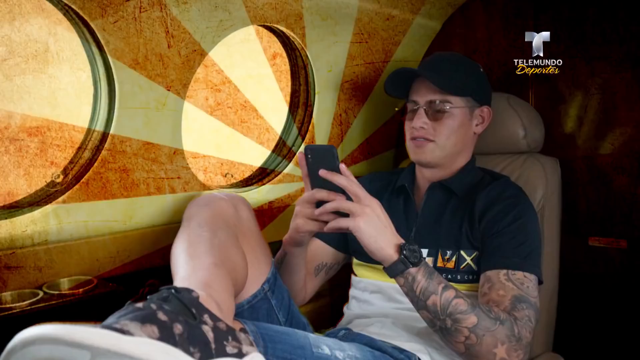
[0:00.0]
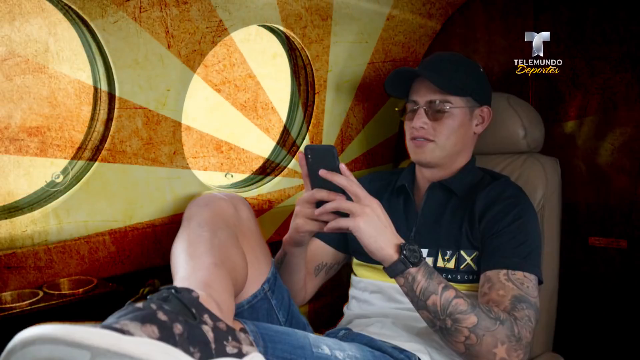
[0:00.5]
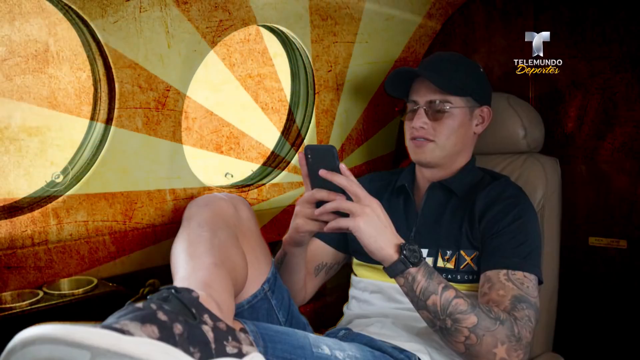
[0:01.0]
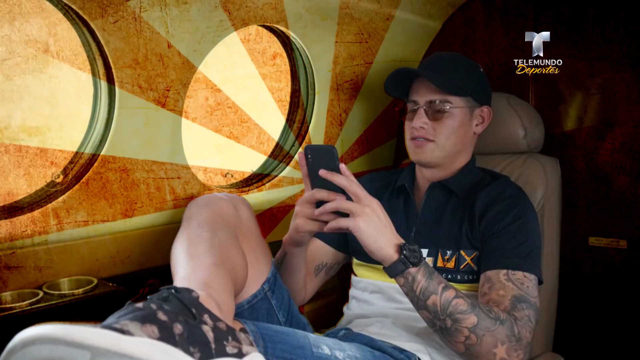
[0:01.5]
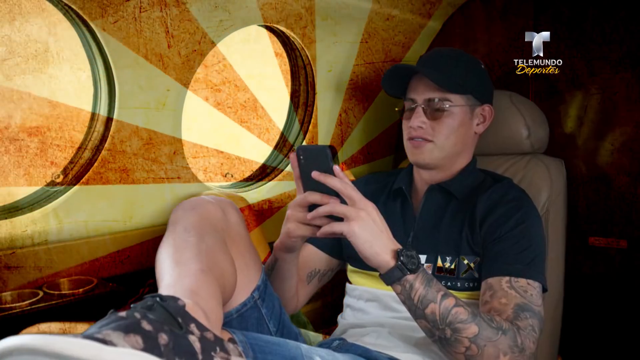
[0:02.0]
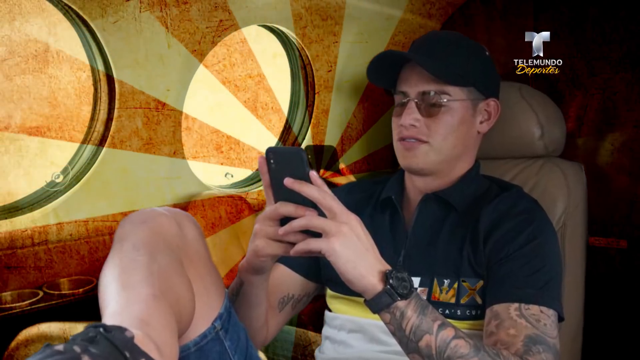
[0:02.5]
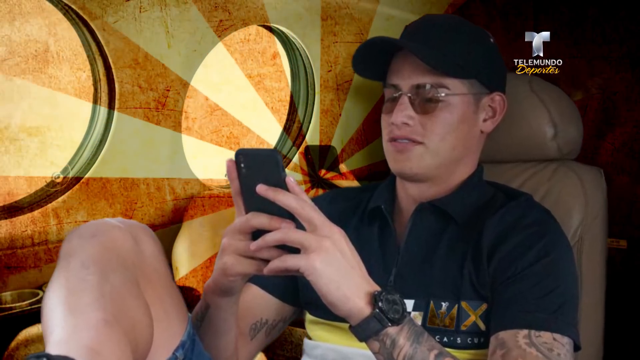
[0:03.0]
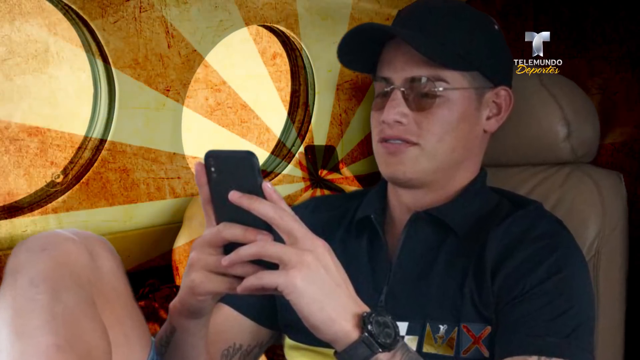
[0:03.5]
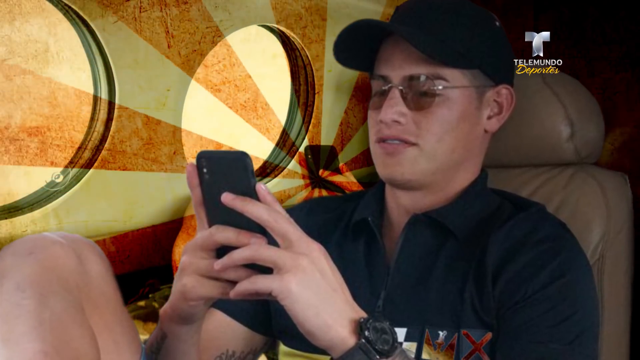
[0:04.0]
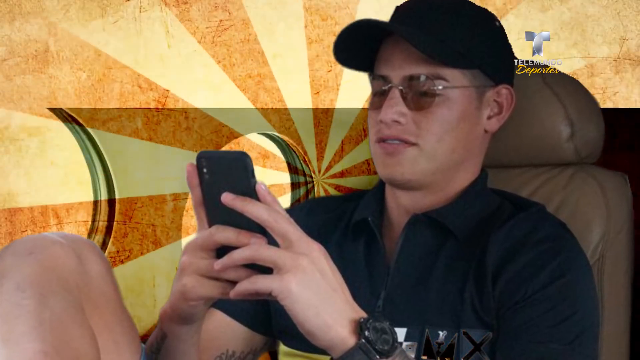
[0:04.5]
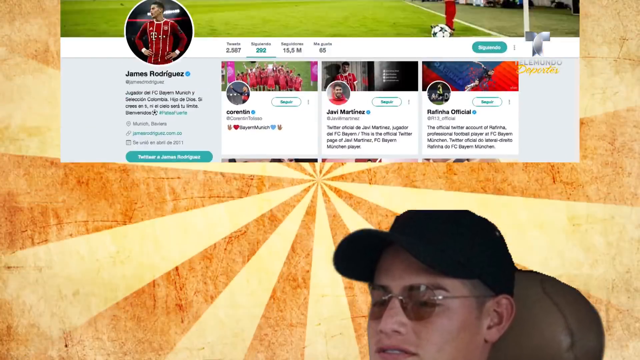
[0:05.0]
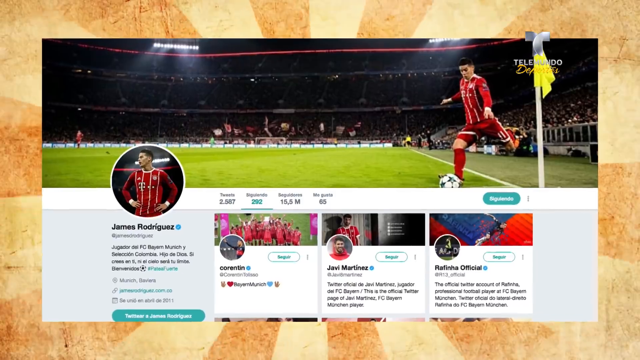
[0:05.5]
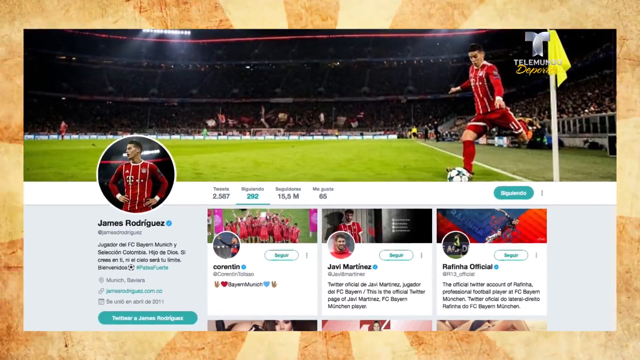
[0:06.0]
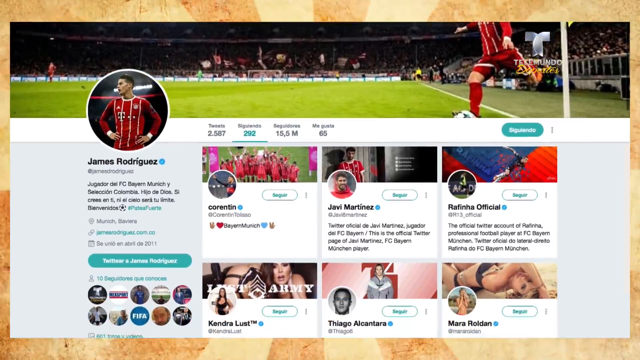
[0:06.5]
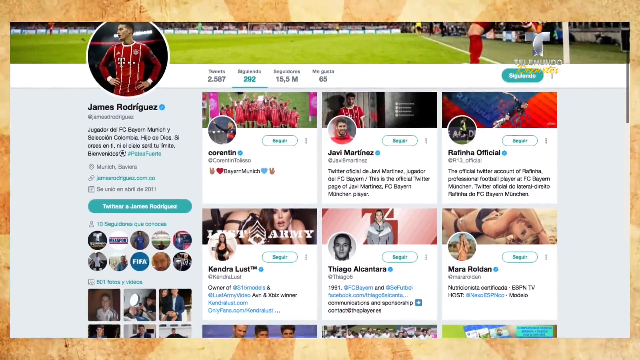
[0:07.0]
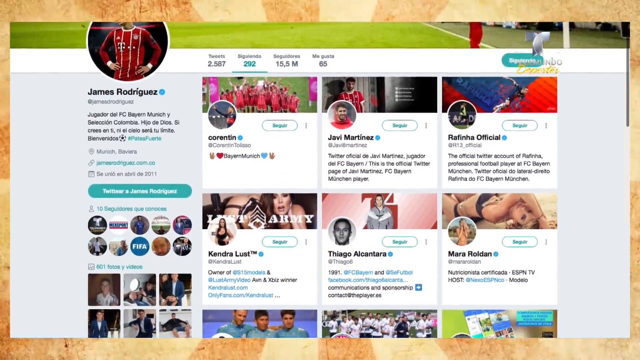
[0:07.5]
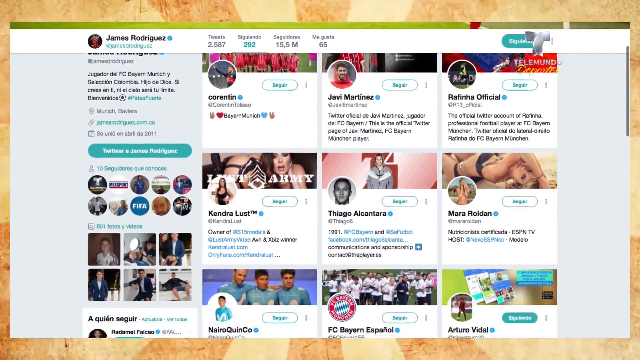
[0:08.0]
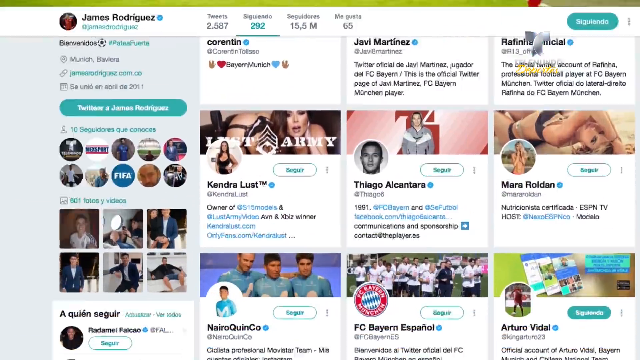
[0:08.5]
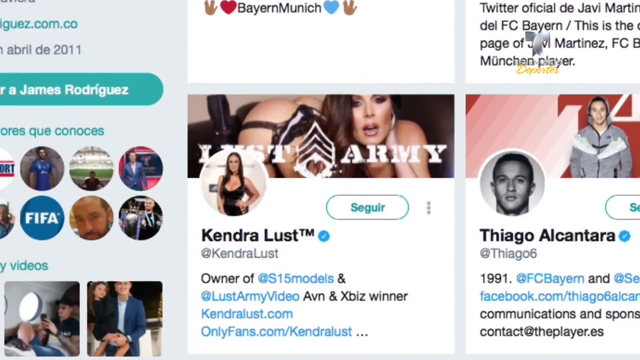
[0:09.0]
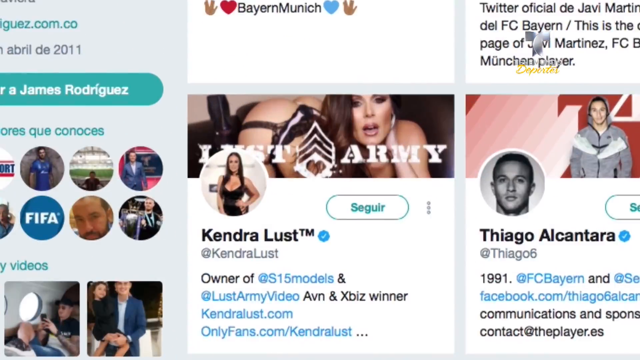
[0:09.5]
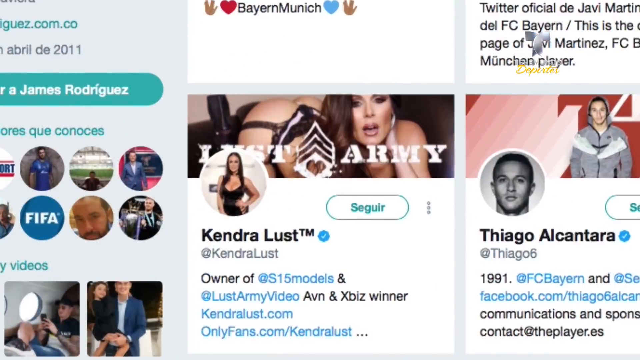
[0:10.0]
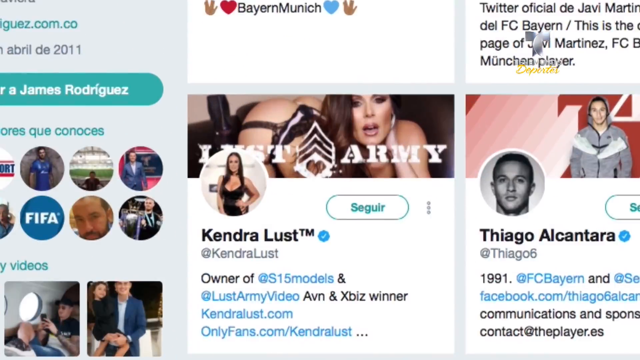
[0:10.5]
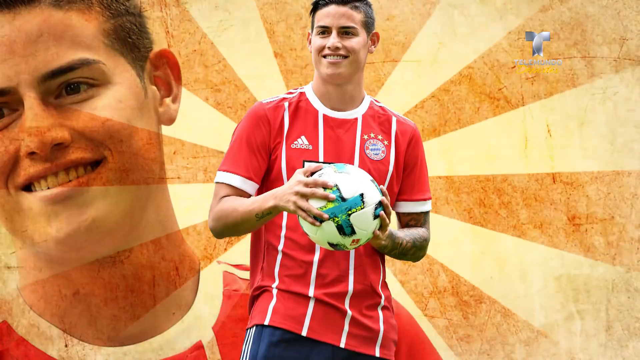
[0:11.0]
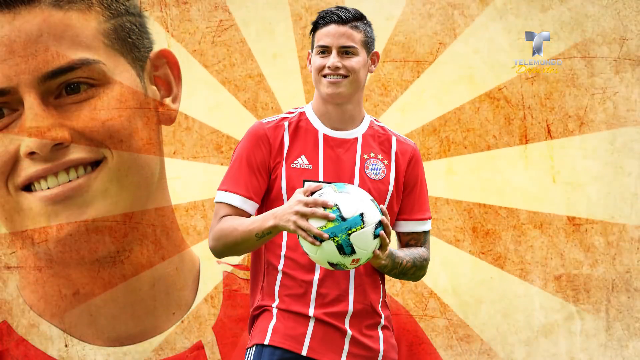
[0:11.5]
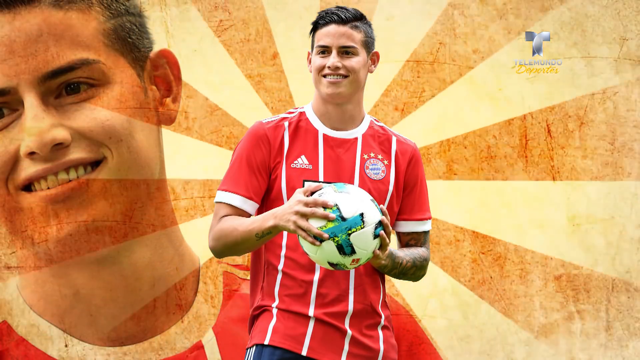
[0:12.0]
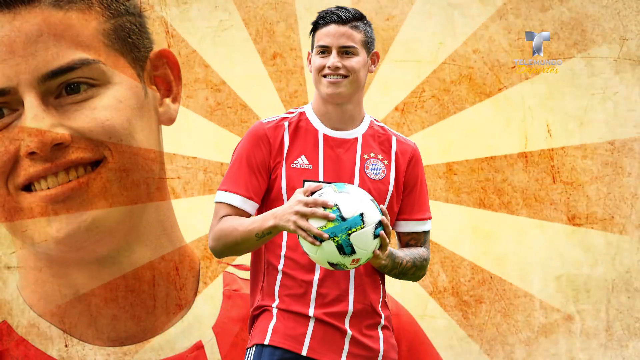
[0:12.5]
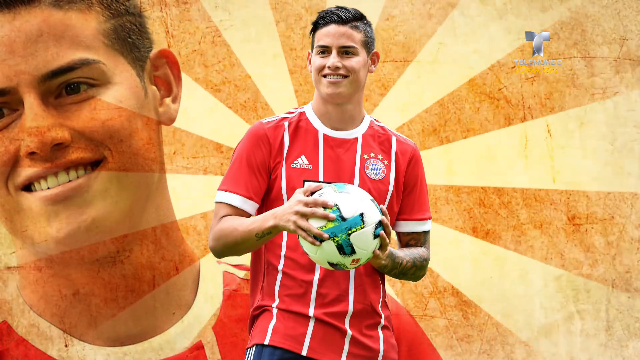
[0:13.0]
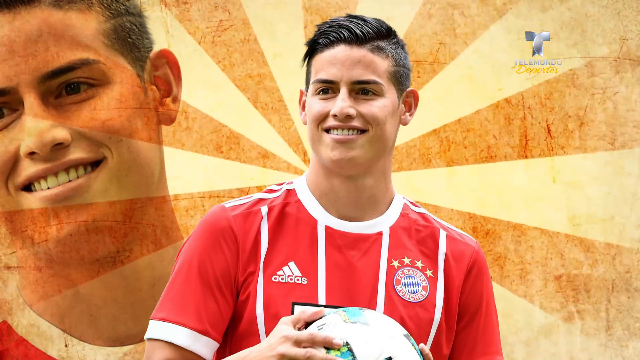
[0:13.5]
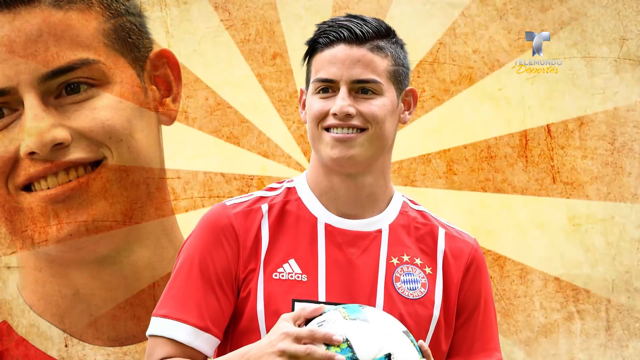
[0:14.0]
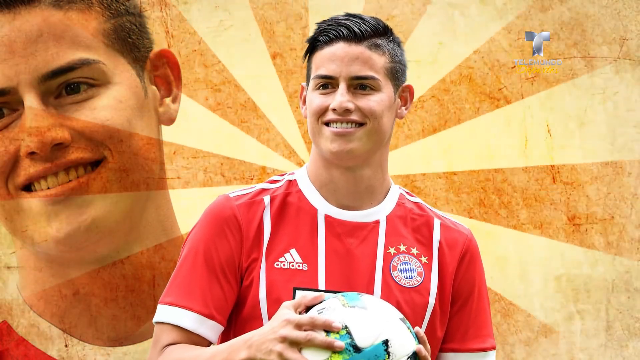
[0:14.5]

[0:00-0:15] The video appears to be about a soccer player. It opens with a cutout of a player who looks to be Jaime Rodriguez. A Telemundo logo is at the top right and bottom of the screen. The player is sitting on what looks to be an airplane seat, with a line spinning in the back and some kind of colorful background. He wears a black cap and a black shirt and is looking at his phone, which shows him scrolling through profiles. The video zooms in on what looks to be the profile of a model or actress named Kendra Lust. Then the soccer player is shown in his uniform, which is red with white stripes and has an Adidas logo; he is holding a soccer ball and smiling.